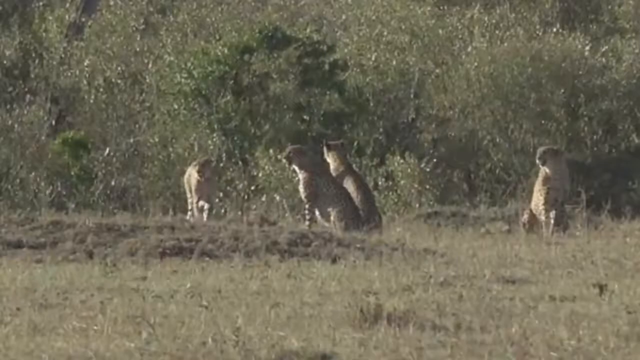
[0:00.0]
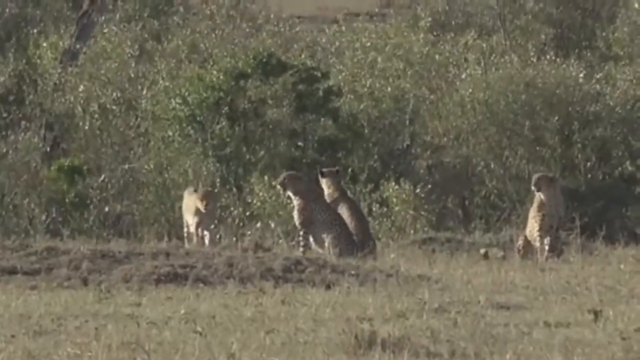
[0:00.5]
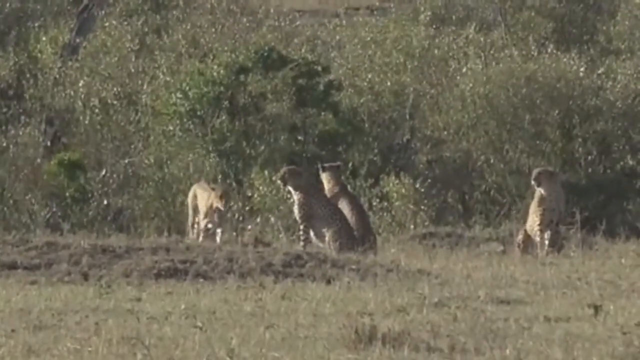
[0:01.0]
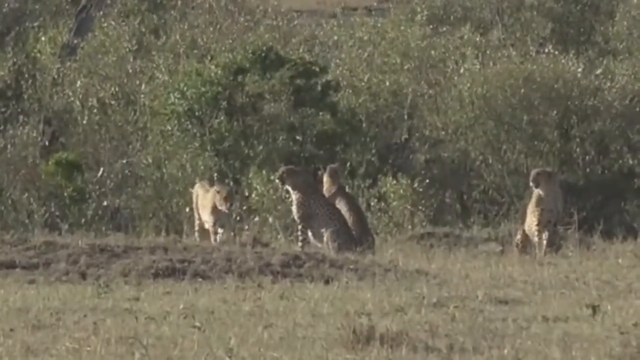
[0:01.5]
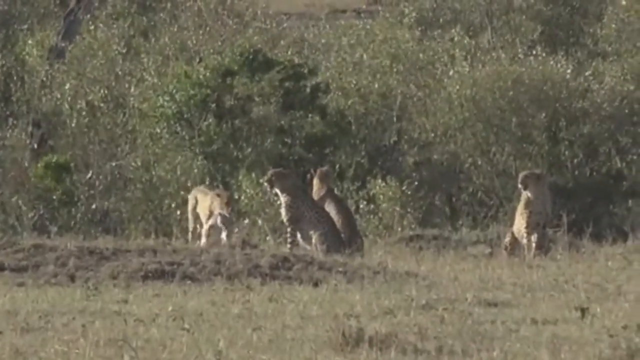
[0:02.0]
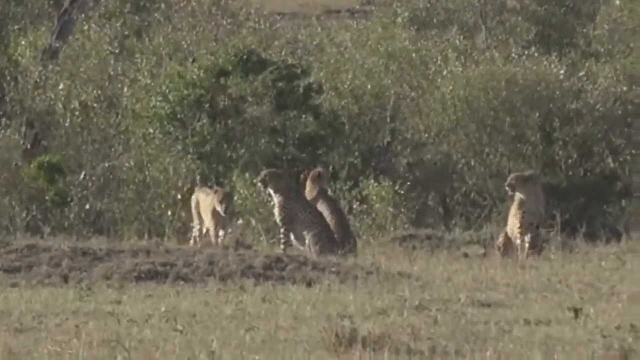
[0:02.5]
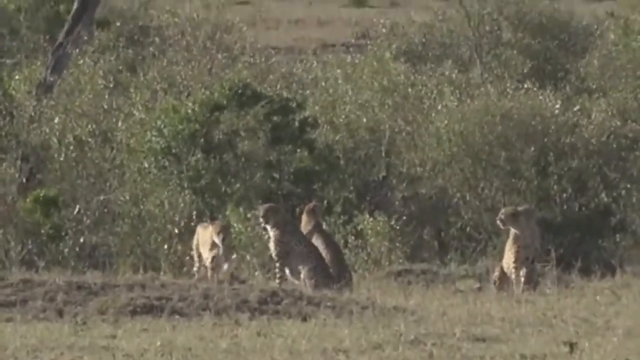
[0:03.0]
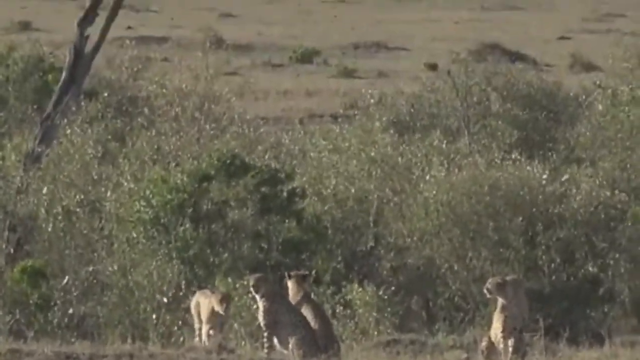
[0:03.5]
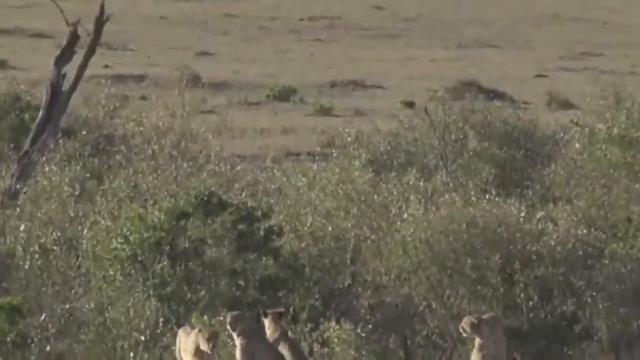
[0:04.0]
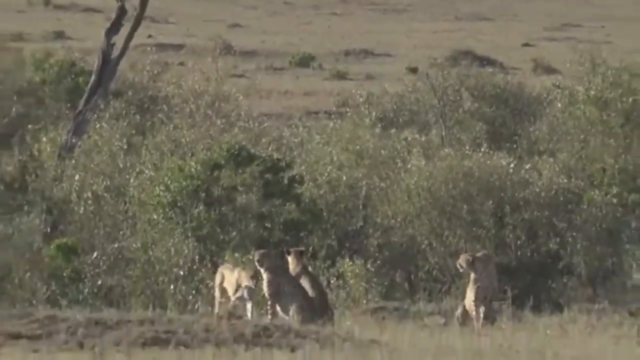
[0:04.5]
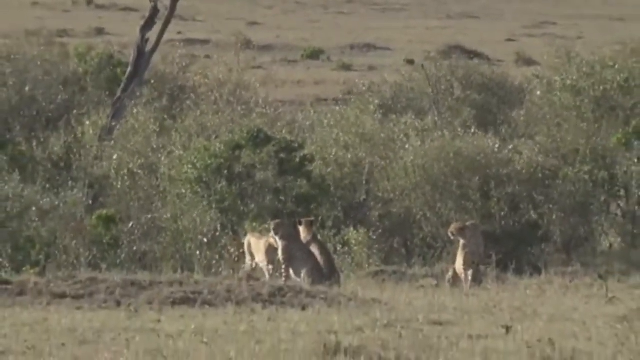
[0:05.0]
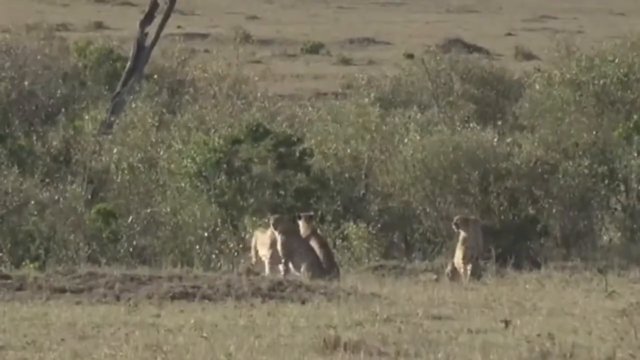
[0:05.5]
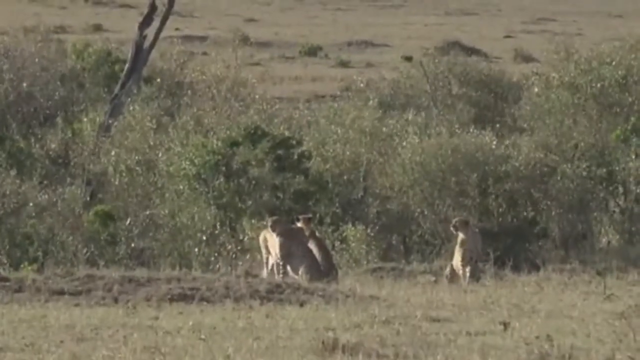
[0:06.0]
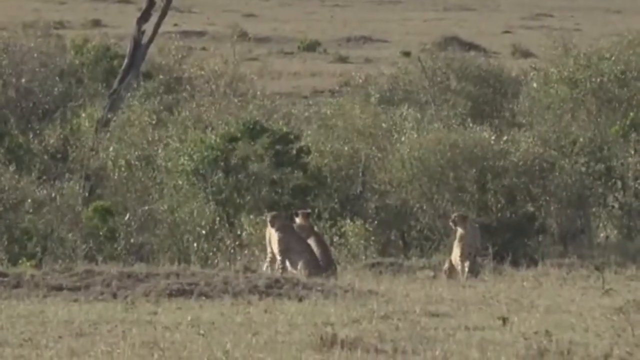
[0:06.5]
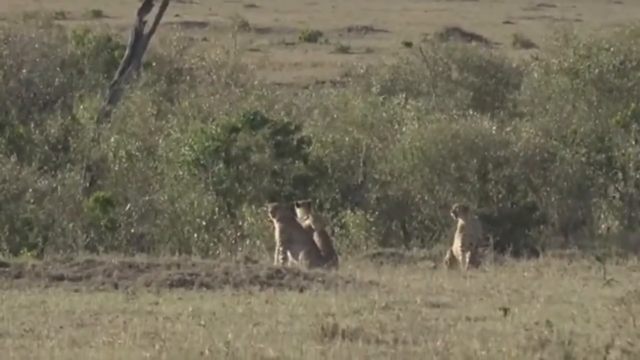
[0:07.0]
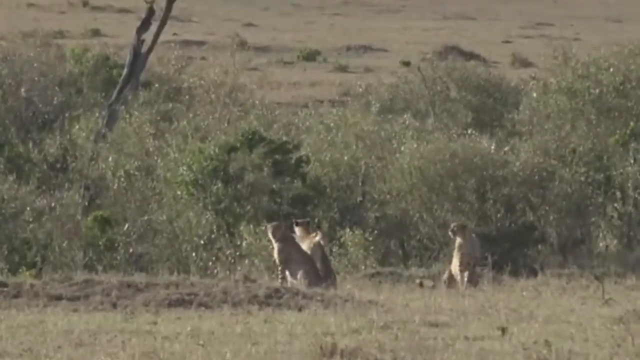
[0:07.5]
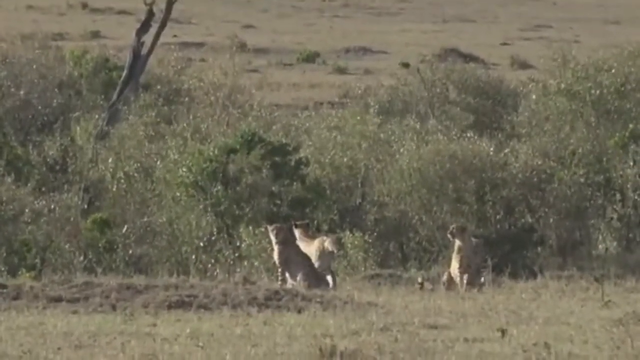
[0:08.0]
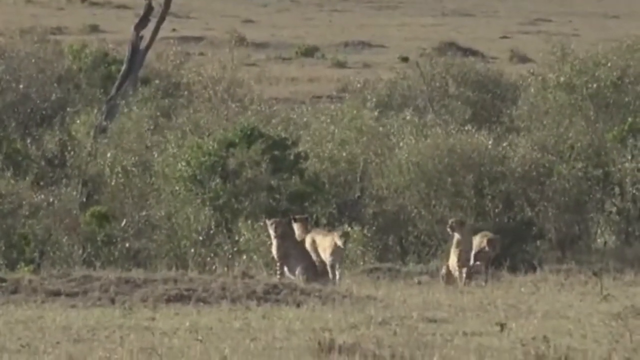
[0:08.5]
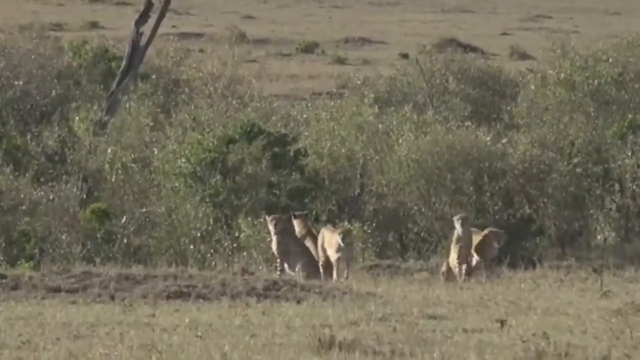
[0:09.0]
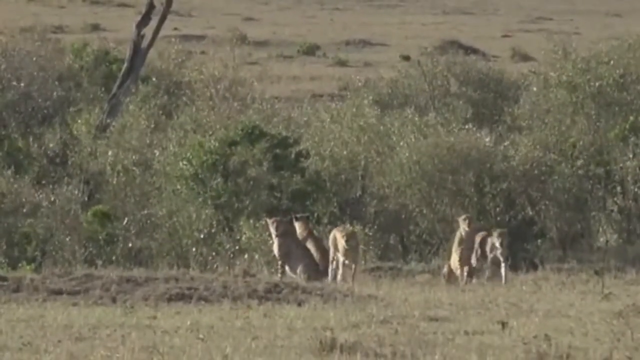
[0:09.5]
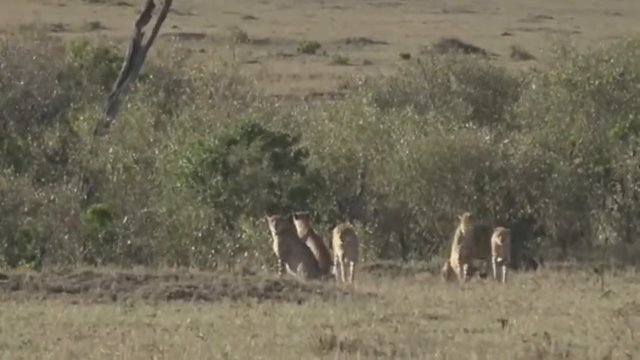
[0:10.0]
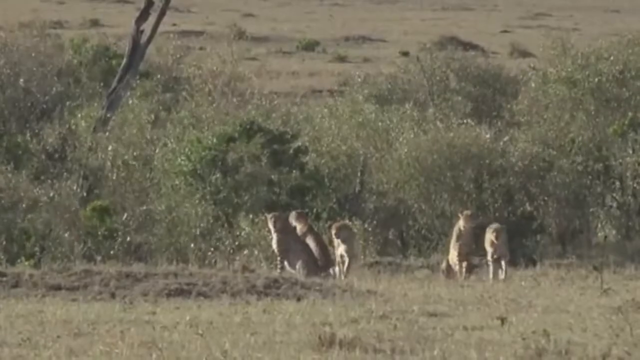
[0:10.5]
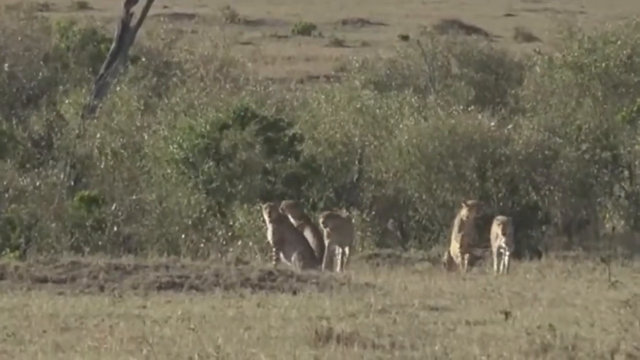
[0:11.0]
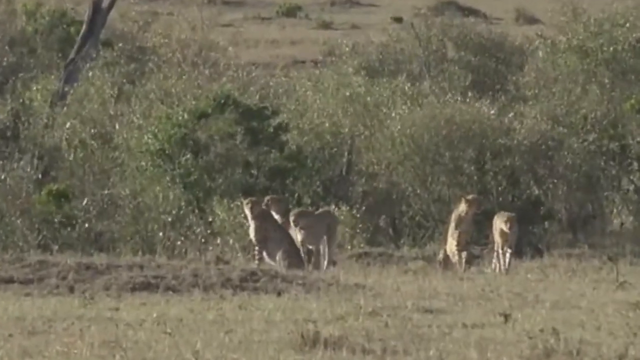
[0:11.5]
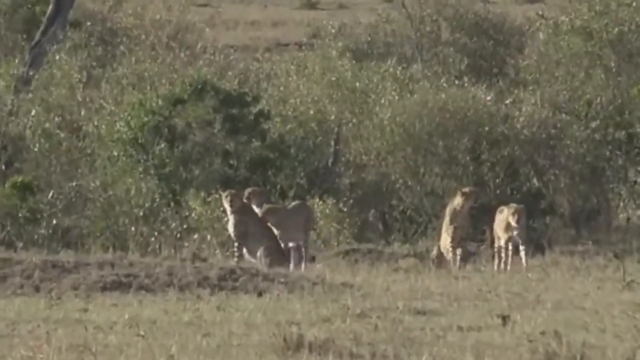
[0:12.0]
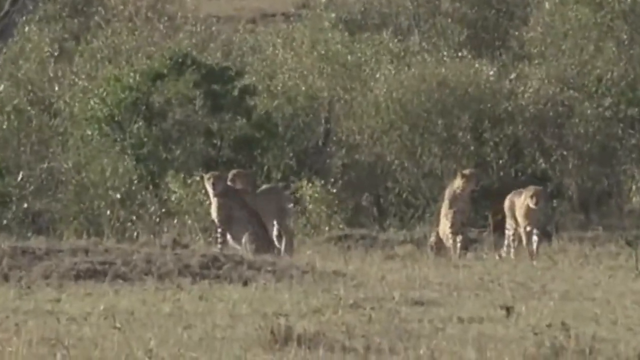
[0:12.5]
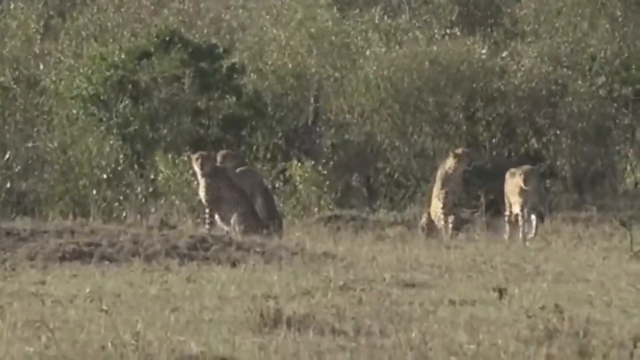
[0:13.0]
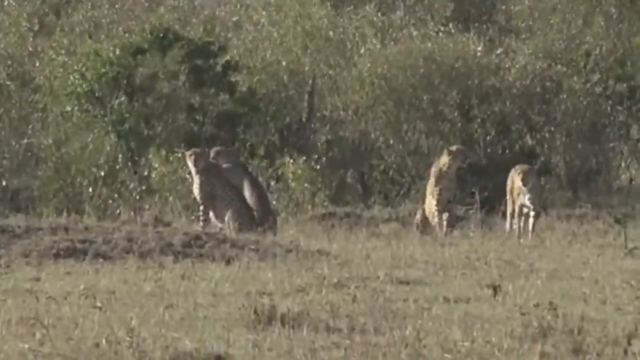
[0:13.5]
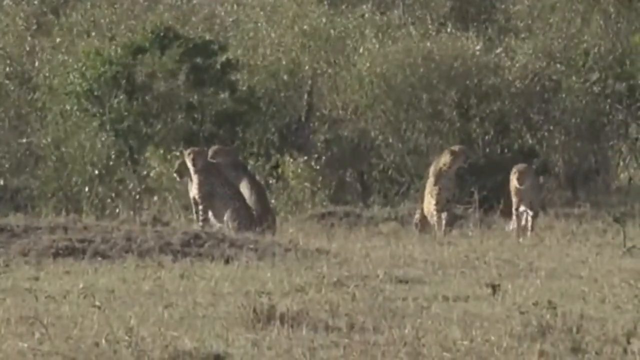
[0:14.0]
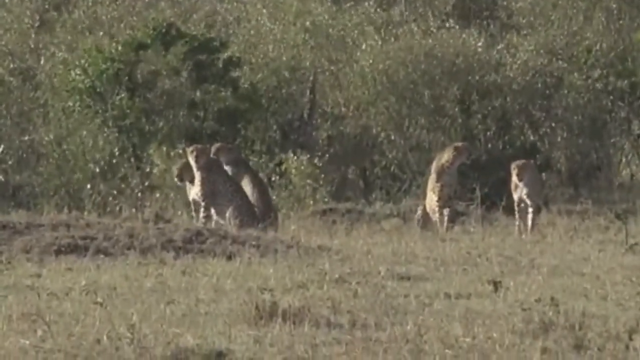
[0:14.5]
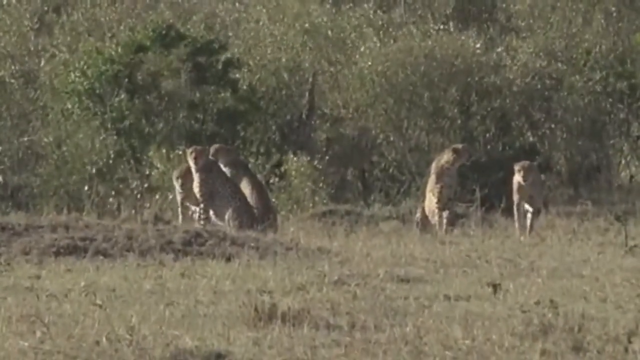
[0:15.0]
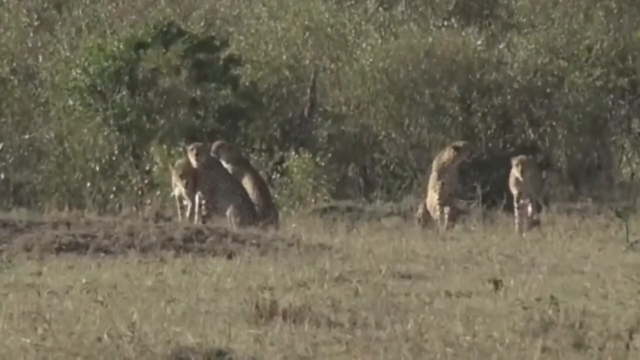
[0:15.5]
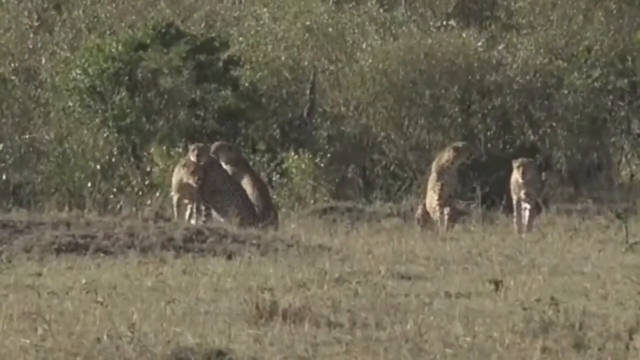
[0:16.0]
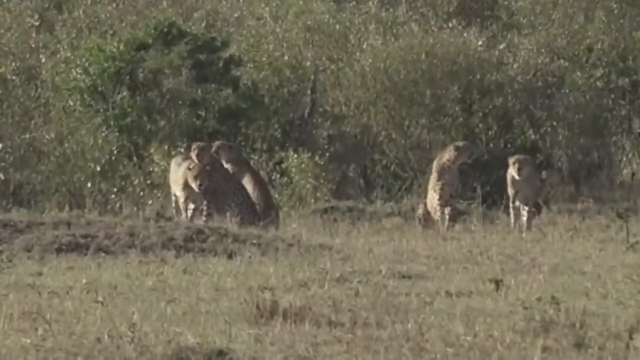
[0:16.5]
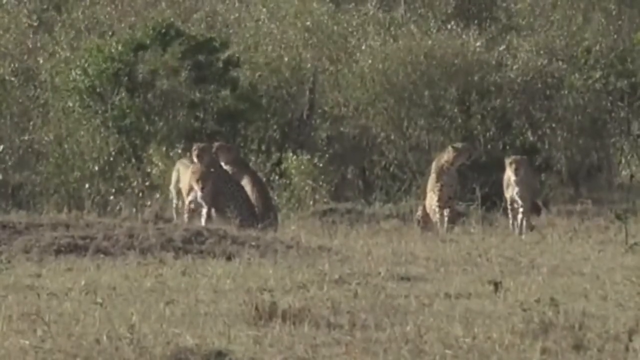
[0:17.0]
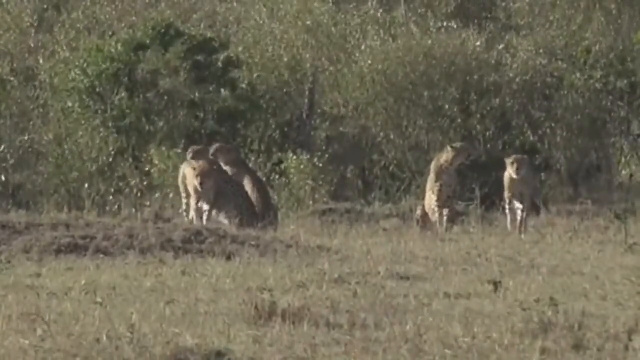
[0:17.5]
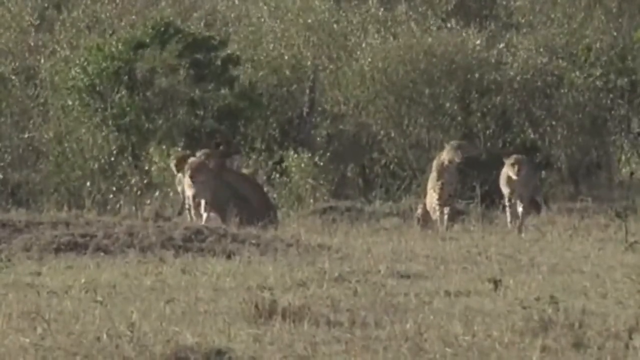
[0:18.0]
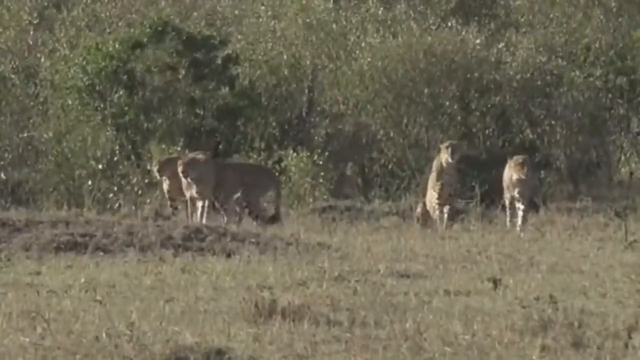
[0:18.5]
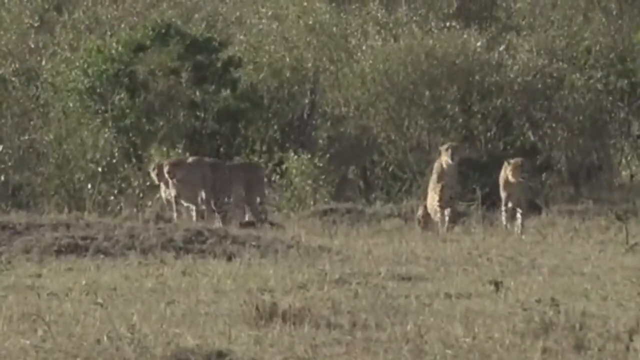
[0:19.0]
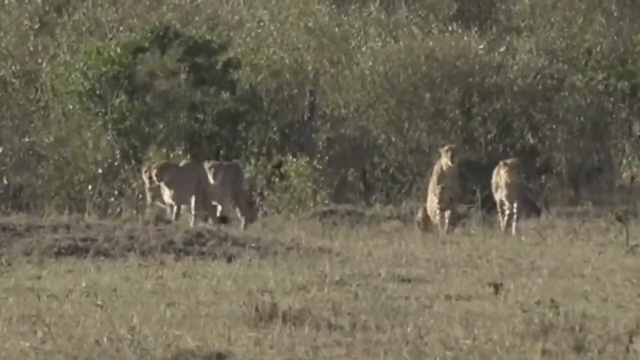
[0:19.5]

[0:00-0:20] Four tigers appear at first to be out in the wild, with some trees behind them. Three of the tigers are seated and one slowly walks toward the others. As it gets closer, it turns out there is a fifth tiger that was kind of hiding behind one of the others, so there appear to be five tigers in total, all in quite close proximity to one another. They look like they are being filmed from a distance. The ground around where they are seated is savannah with light brown or slightly green grass, and some trees are visible in the distance. Beyond the area with trees there is almost a desert in the background. The camera zooms out and then zooms back in, giving a view further into the distance.